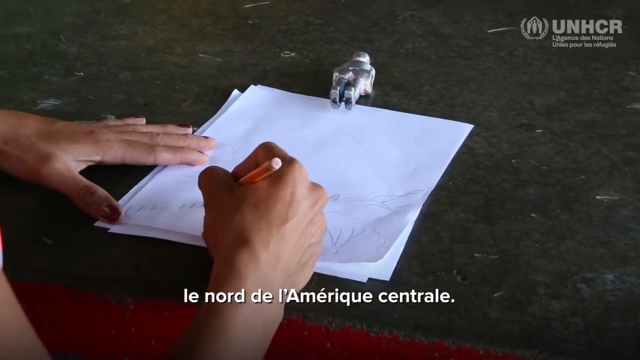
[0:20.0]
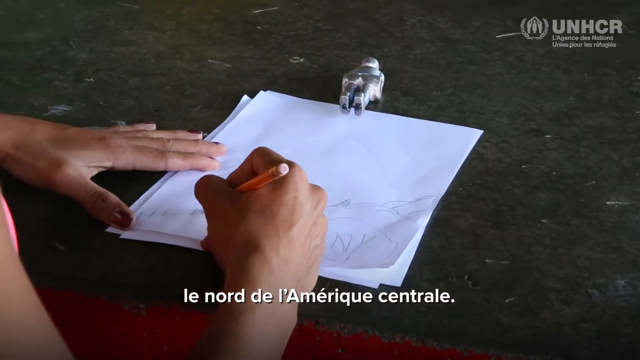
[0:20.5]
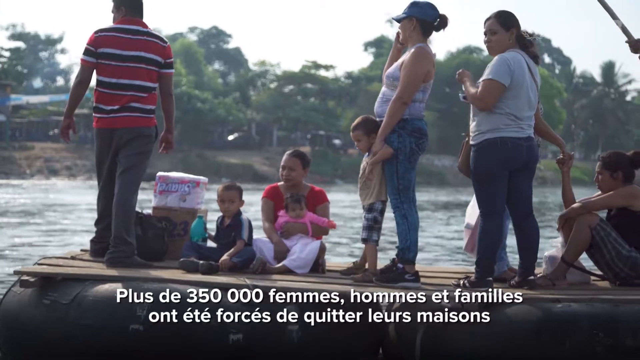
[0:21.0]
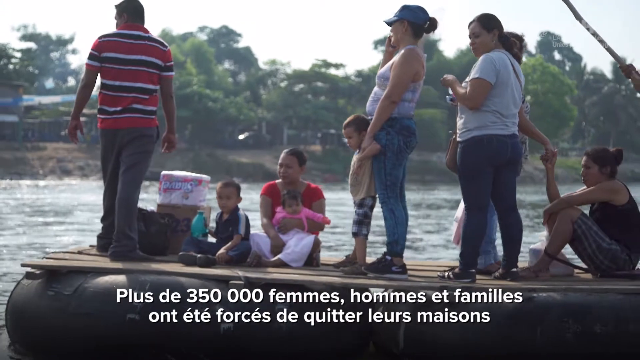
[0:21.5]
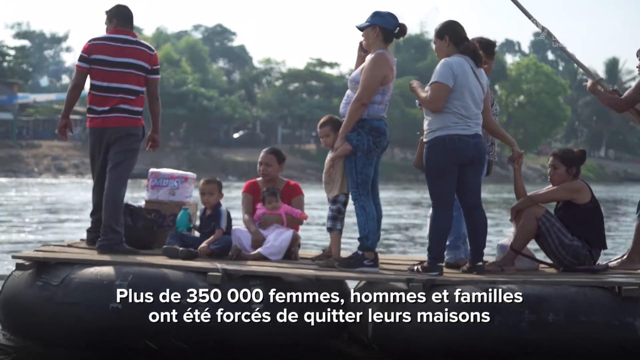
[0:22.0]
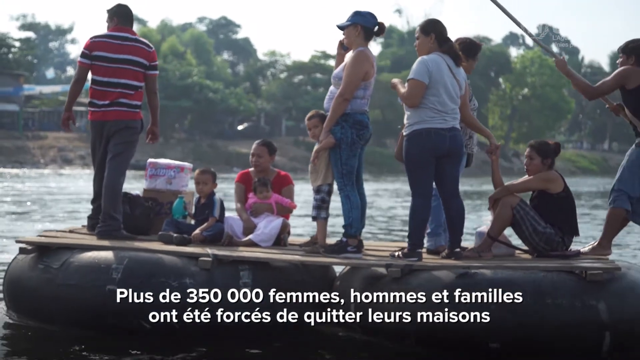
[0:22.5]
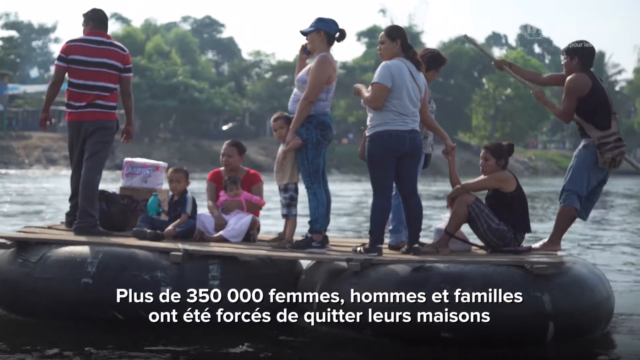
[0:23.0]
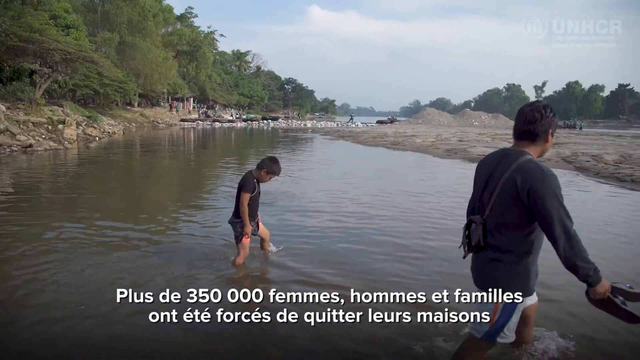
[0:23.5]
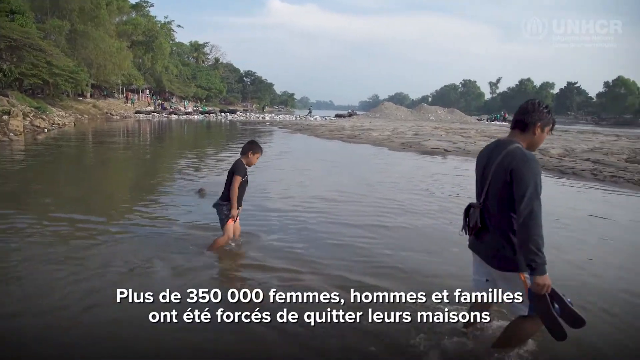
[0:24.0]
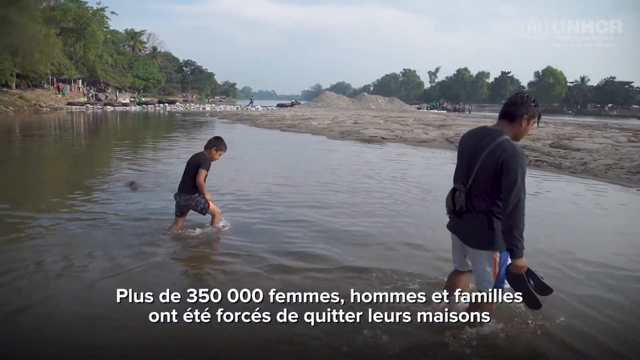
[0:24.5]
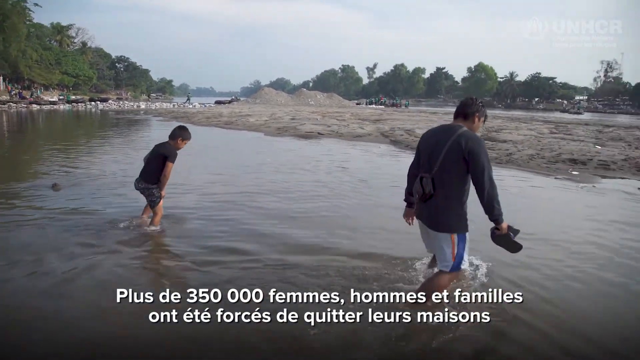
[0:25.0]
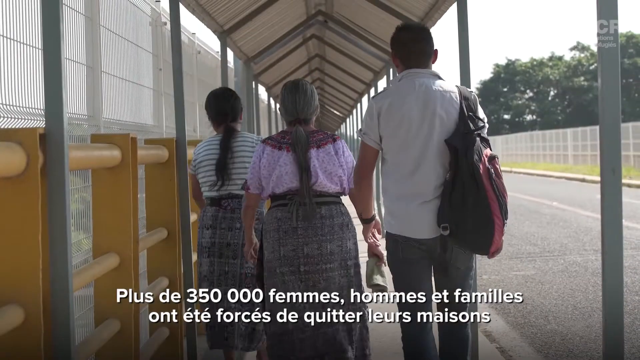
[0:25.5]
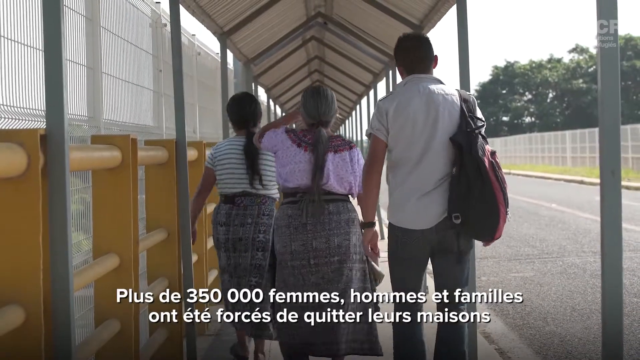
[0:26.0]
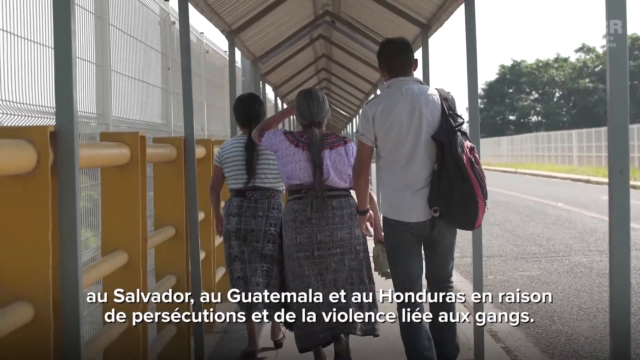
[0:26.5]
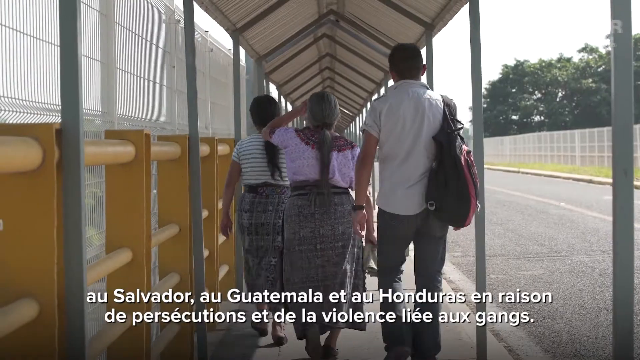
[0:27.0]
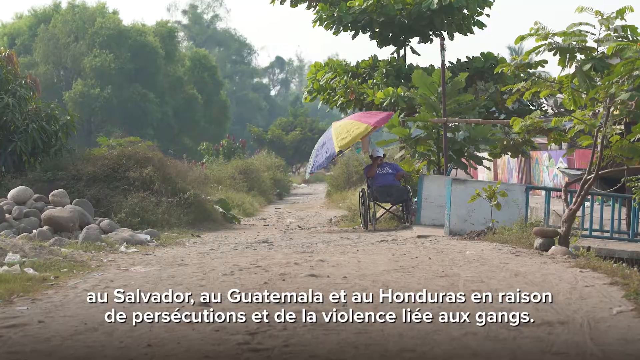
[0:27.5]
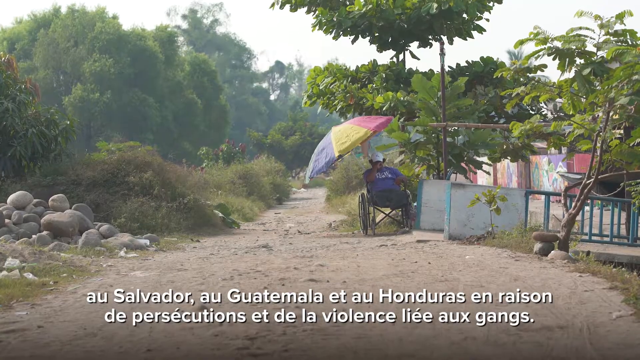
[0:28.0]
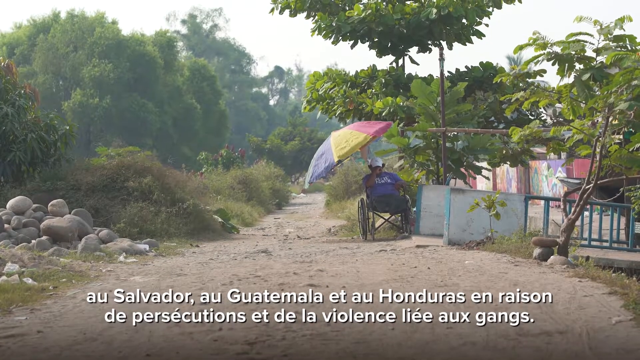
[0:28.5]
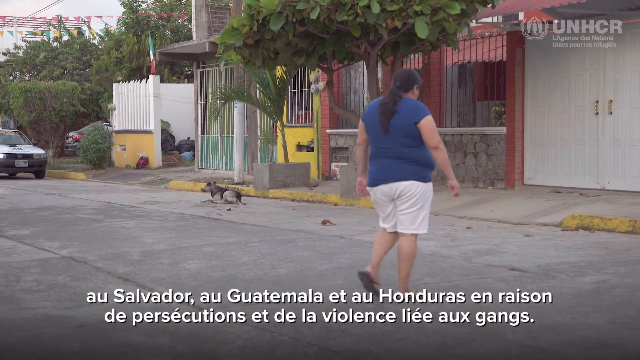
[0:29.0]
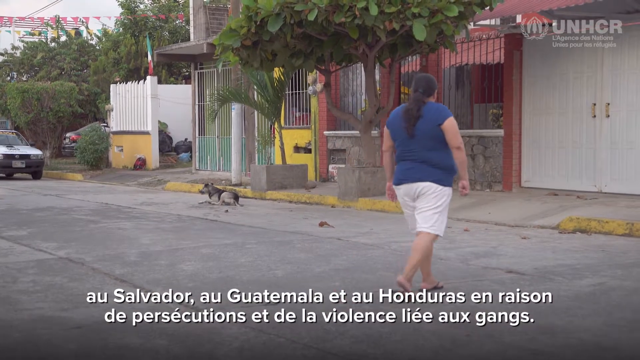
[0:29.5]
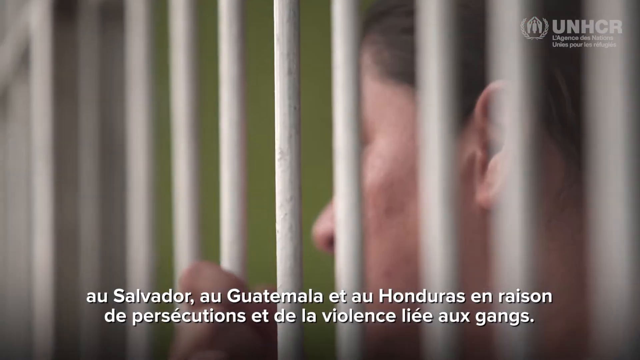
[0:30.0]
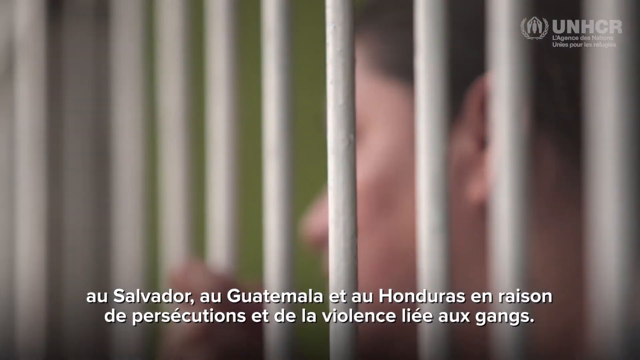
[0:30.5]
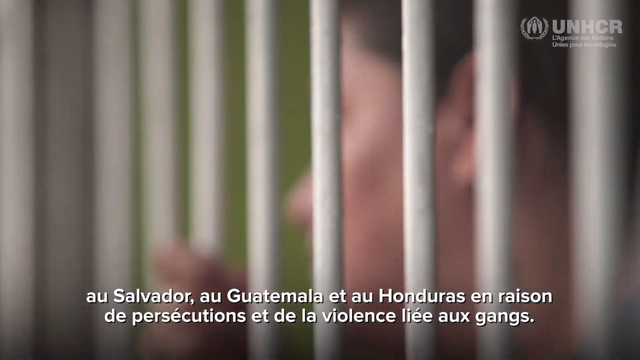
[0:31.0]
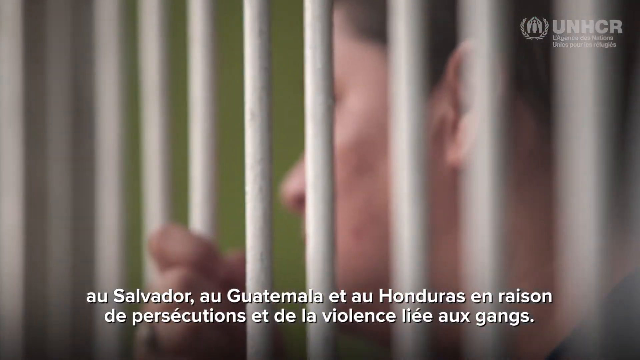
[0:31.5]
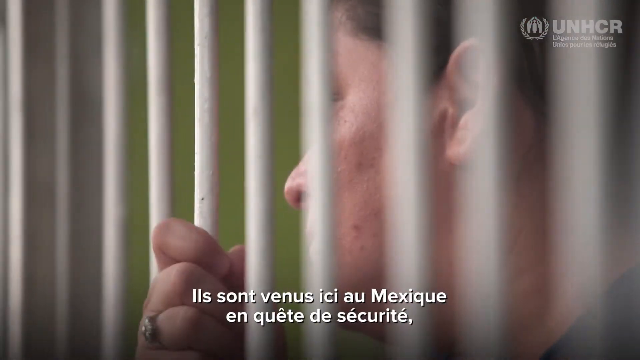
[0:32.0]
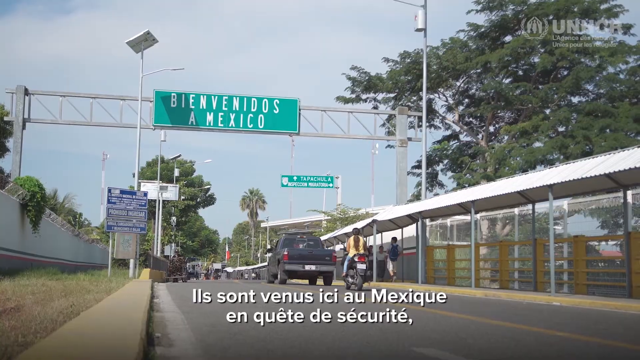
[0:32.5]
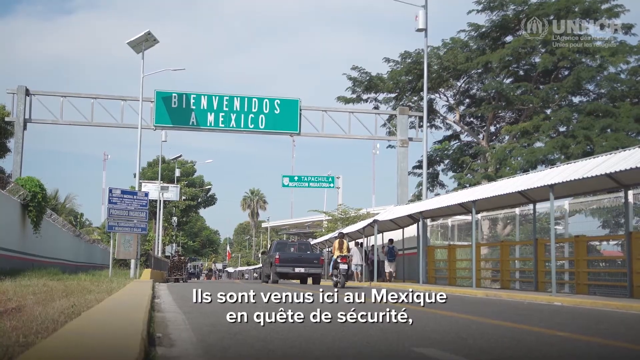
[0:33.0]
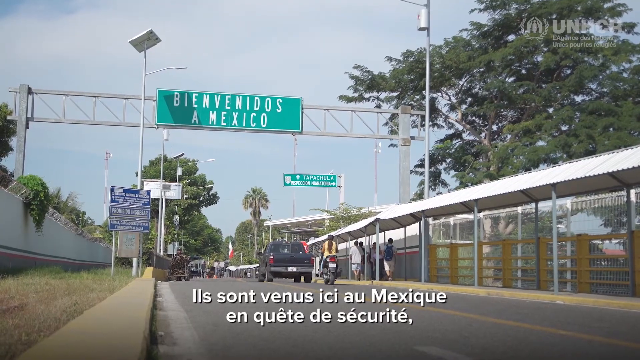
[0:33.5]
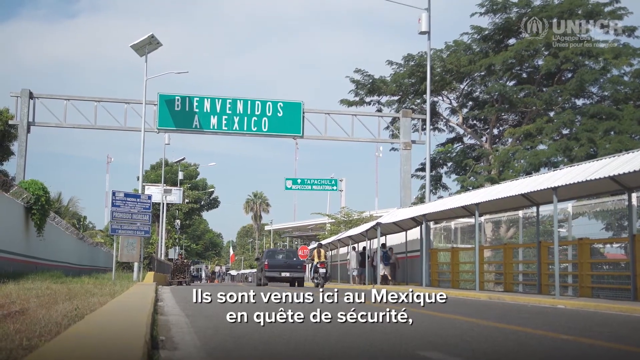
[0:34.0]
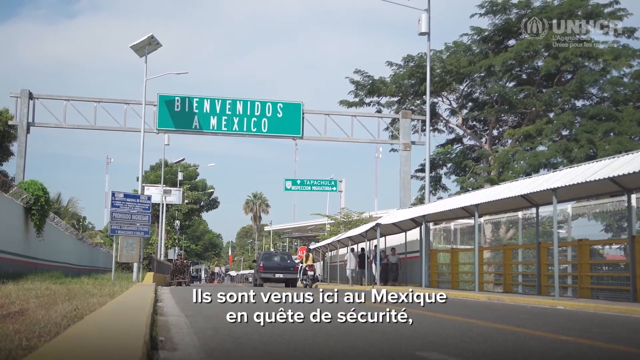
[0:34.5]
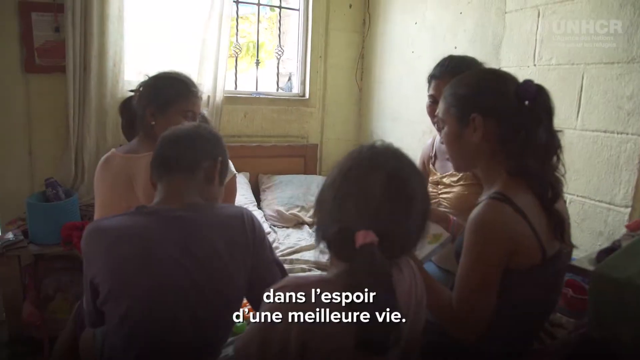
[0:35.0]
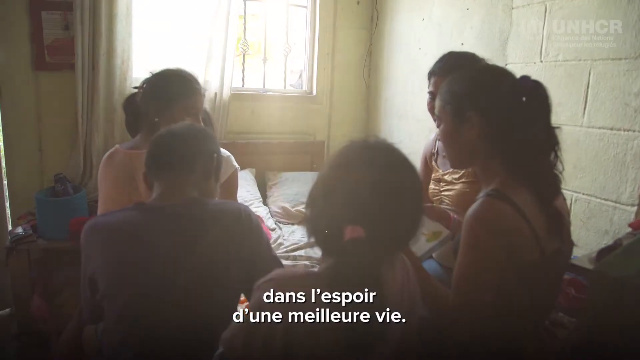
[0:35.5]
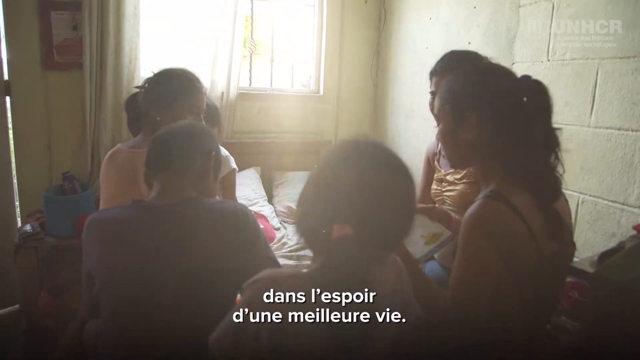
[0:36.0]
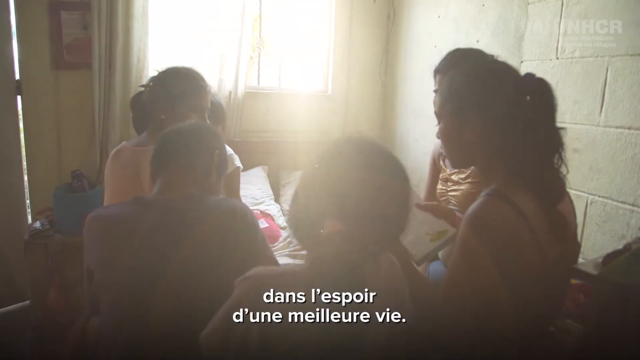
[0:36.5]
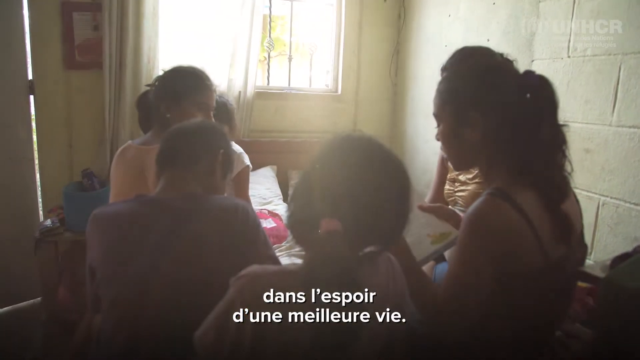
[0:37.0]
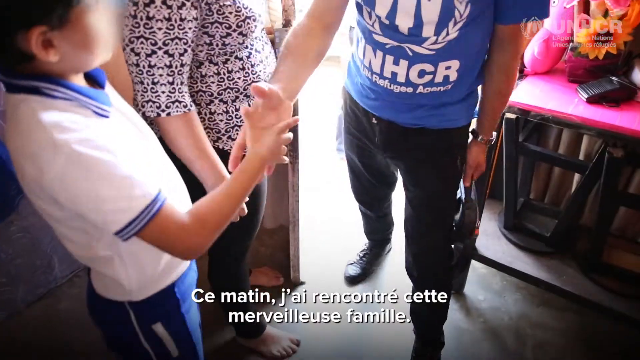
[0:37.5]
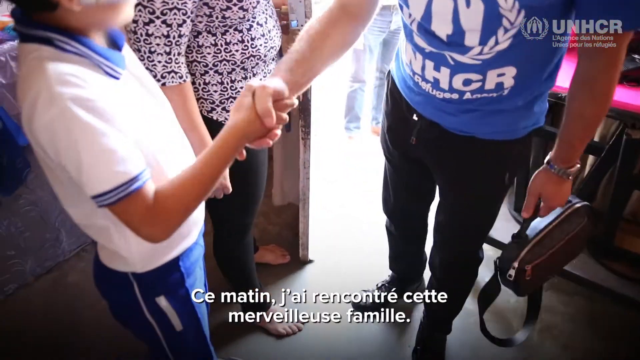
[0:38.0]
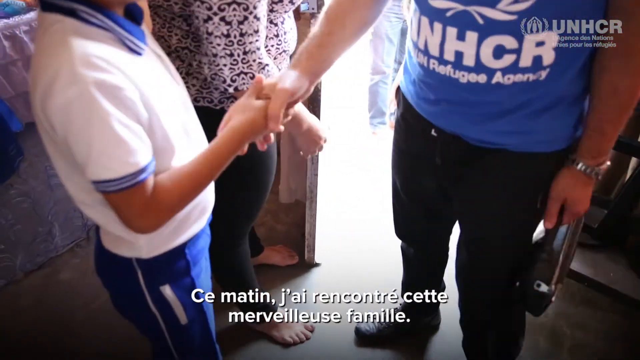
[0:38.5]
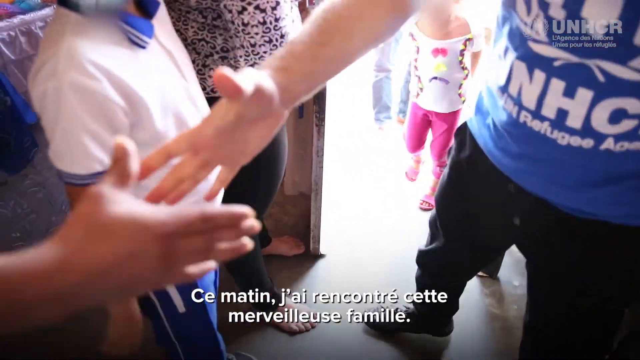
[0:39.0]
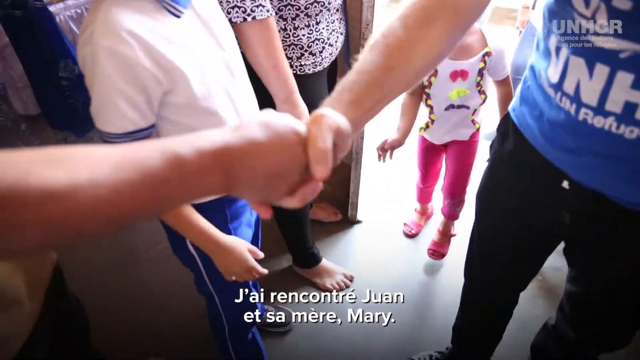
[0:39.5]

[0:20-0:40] A bunch of people appear to be riding some type of boat, a wooden boat, on what looks like a river. A man on the far left wears a red, white and black striped shirt. Three children seem to be in sight: a young boy sitting down, a young boy standing up, and a little girl baby held in the arms of her mother, who is also sitting down. Four people are on the right side of the boat: two women standing up, one woman sitting down, and a woman or man behind one of the others. White text appears at the bottom middle. The scene changes to a boy walking across the river with what looks like an older boy or older man; both have their backs to the camera and wear black clothing. Next, three people walk away with their backs toward the camera: a woman on the far left, an older woman in the middle, and a man on the right wearing a backpack. Then a man sits in a chair with an umbrella over him, followed by a quick shot of a woman crossing a street. A close-up shows a person behind what appears to be a fence, kind of like a prison area. The scene changes to a road, and finally to a family in a bedroom, where one of the older kids or maybe the mother appears to be reading a book to the family.